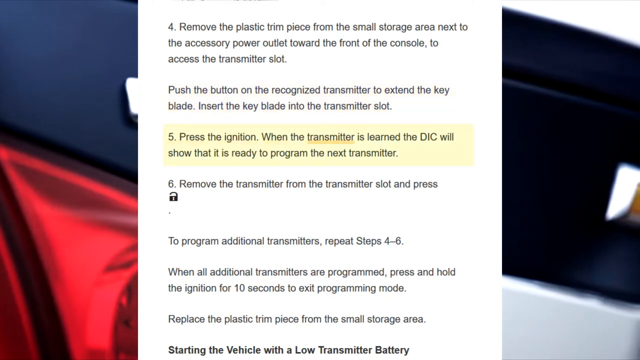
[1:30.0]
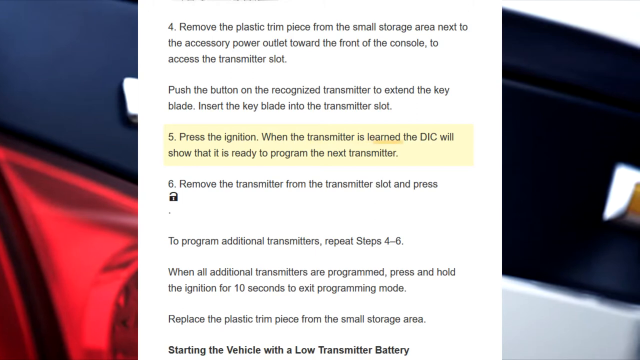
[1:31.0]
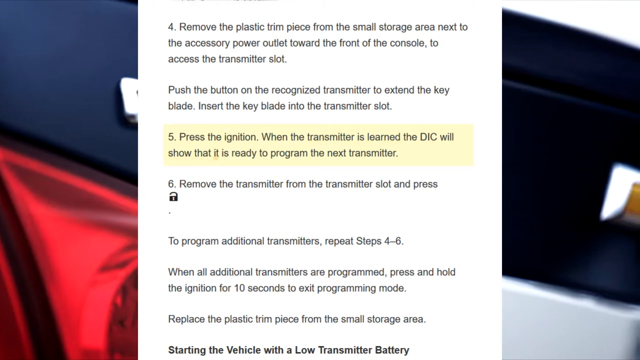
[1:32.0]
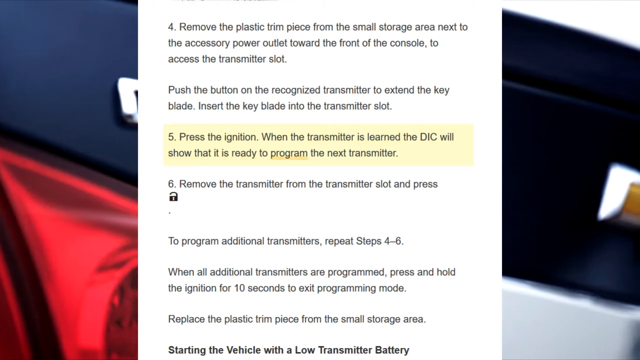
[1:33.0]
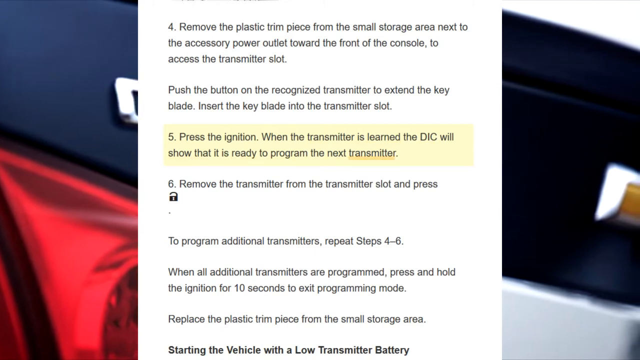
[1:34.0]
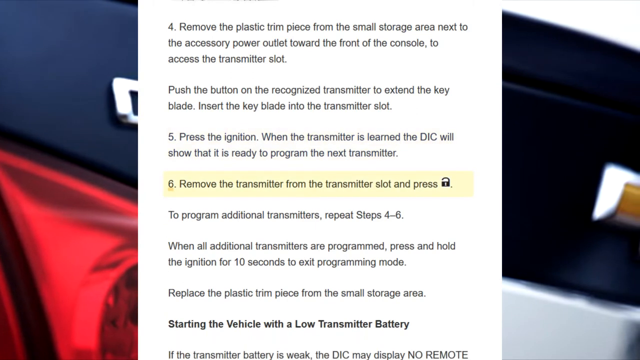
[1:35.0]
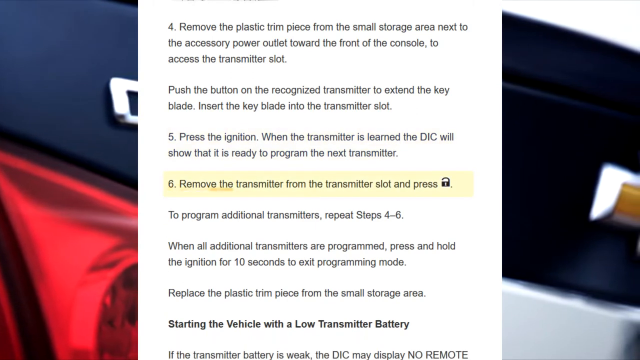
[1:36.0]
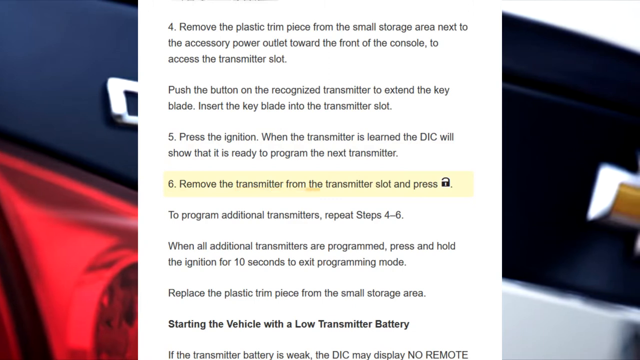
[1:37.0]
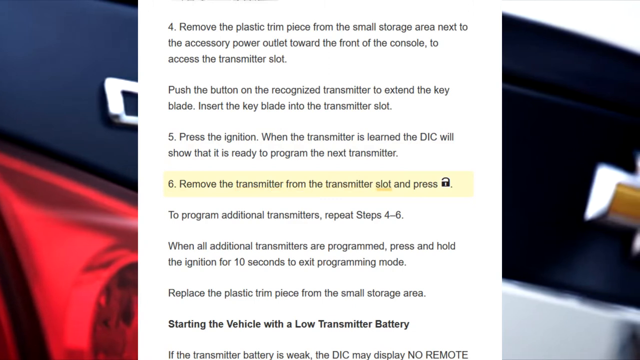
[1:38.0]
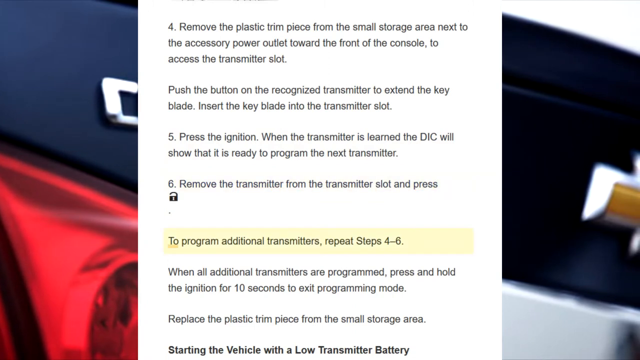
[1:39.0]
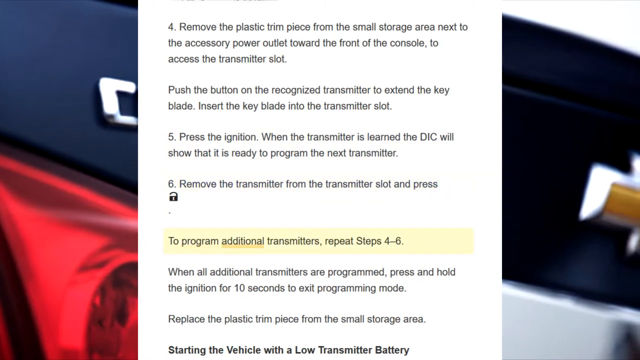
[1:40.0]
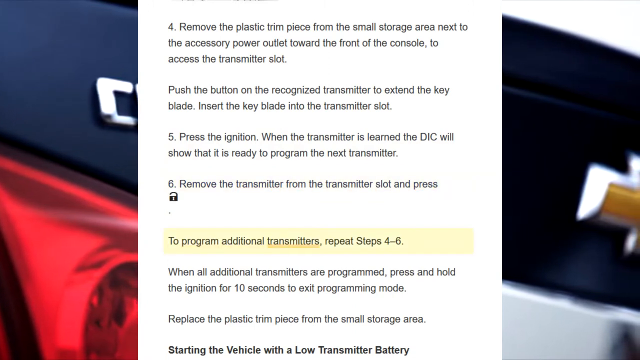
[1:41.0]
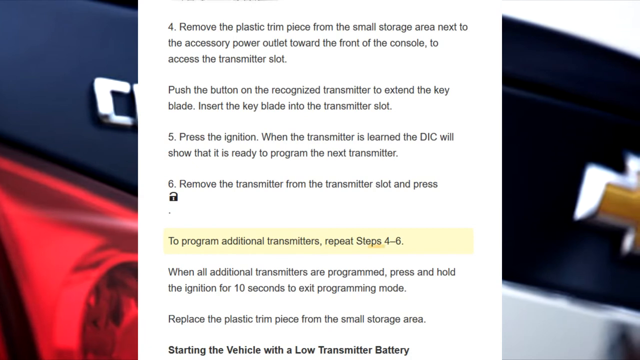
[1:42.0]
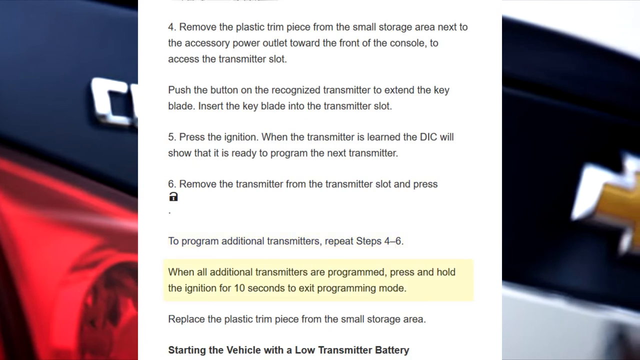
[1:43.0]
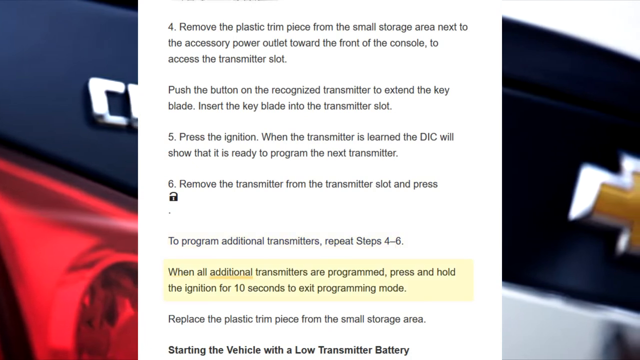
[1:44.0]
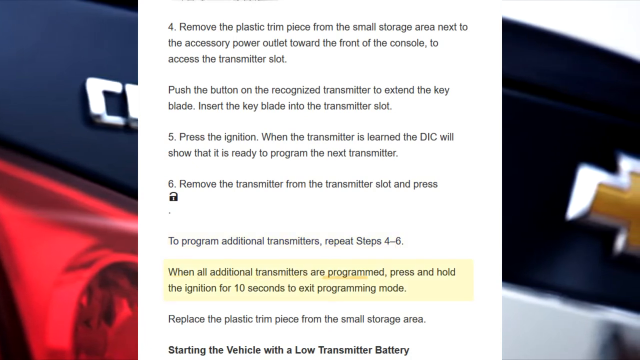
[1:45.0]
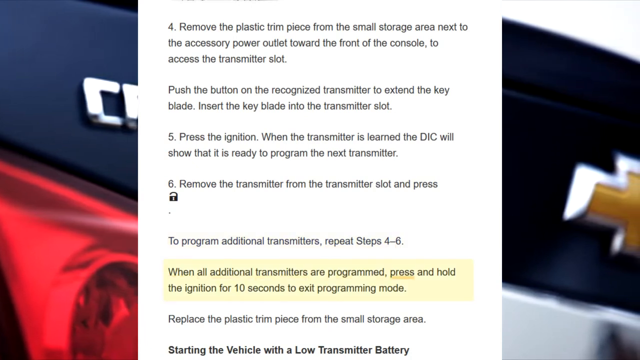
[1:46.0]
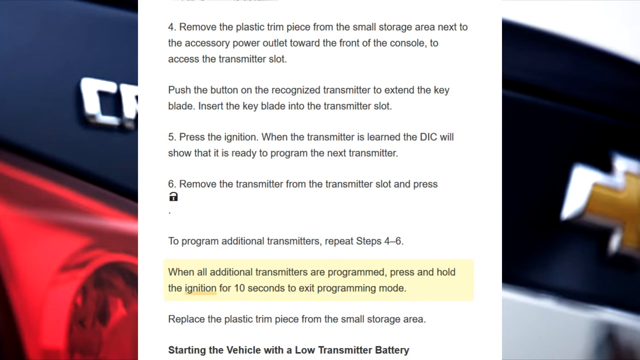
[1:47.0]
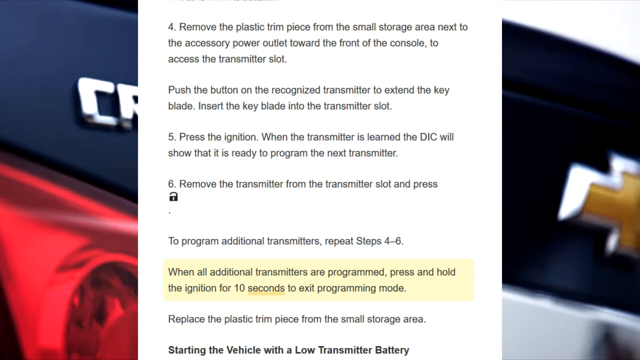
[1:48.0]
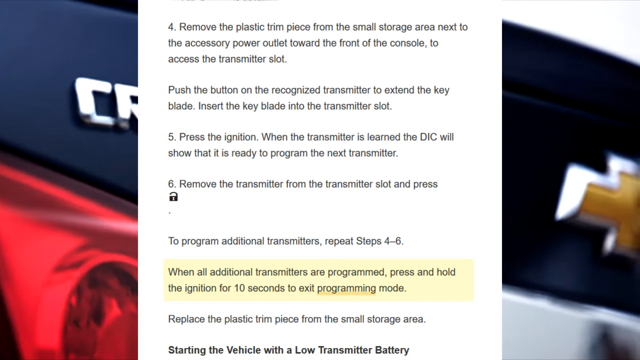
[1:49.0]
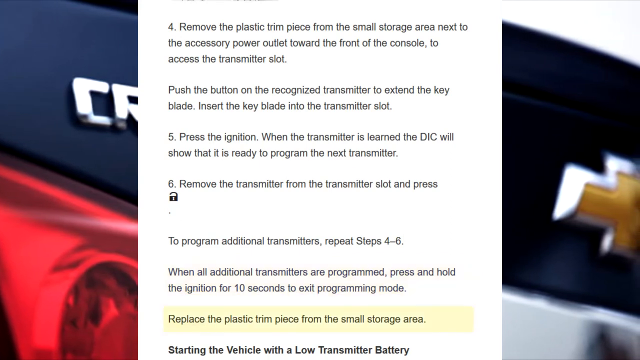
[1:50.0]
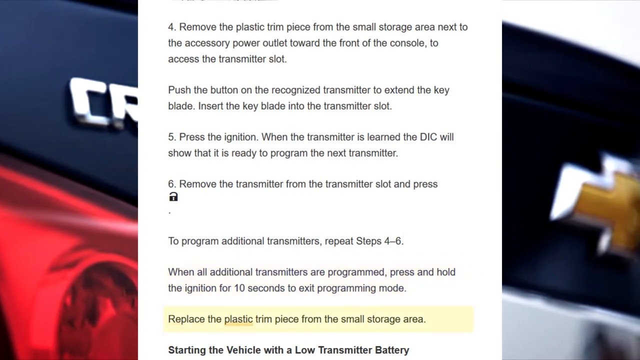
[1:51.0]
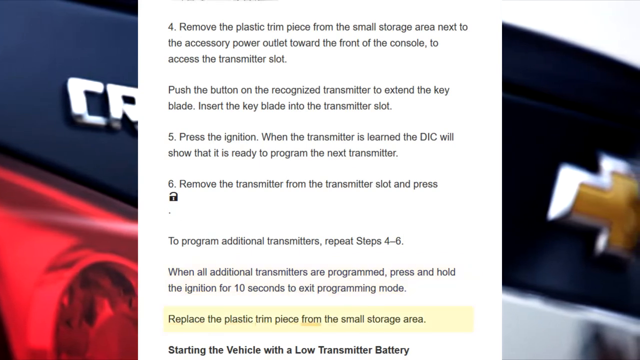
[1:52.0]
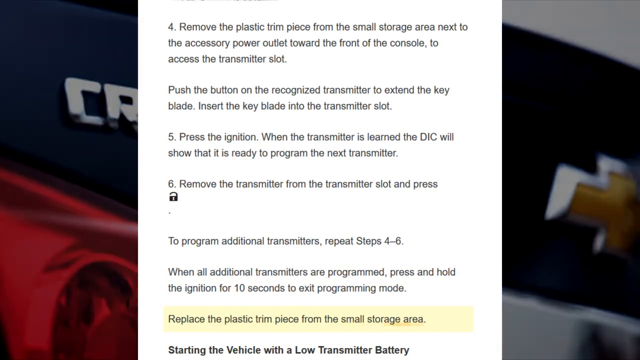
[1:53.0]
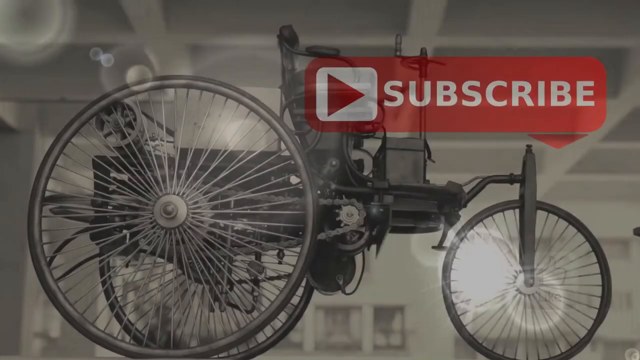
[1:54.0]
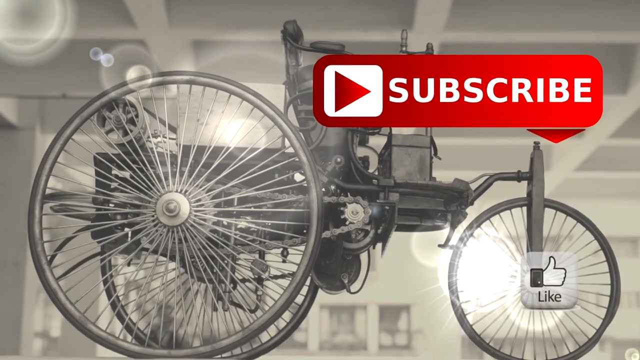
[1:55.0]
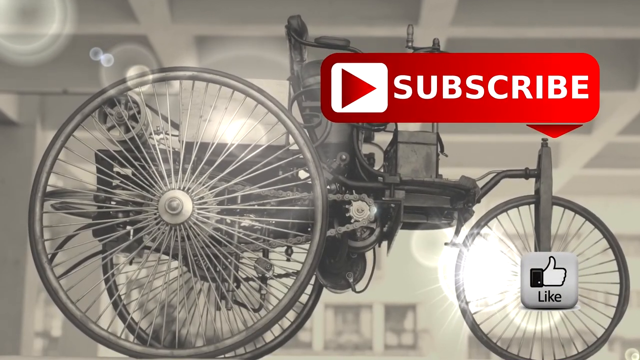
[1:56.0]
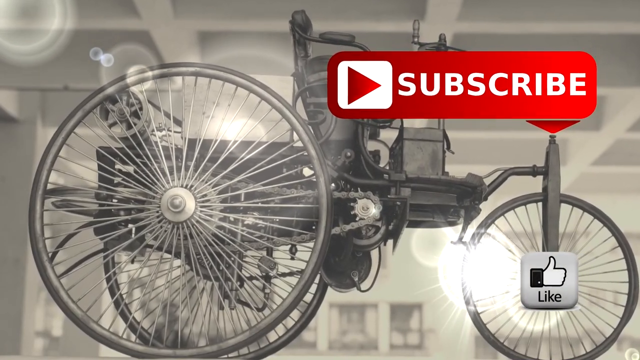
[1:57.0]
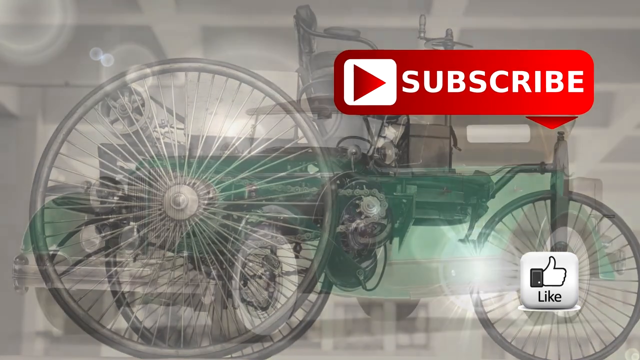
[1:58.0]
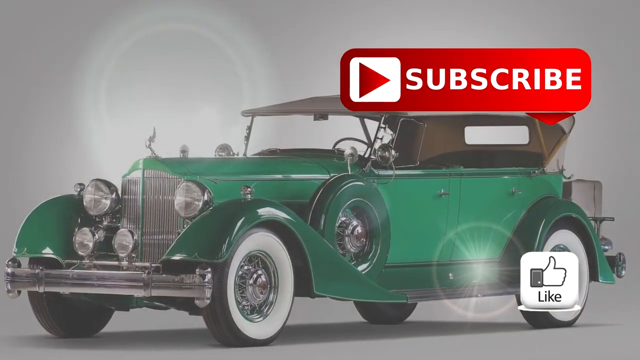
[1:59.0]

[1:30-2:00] The view pans ever so slightly to the right as the highlight moves from paragraph five to paragraph six, which says to "remove the transmitter" and "press the unlock button." As it pans right, part of a Chevy logo with a silver border and yellow inside comes in from the right side, and a C comes in on the left. The next paragraph says "to program additional transmitters. See steps four through six"; it is highlighted and then each word is underlined individually. The next one highlighted says "when all additional transmitters are programmed, press and hold the ignition for 10 seconds to exit programming mode." Still panning slightly right, the next letter over from the C is visible as an R. The video then shows an old three-wheel bicycle: metal in the center, a big chain, the single tire on the right side and slightly bigger wheels on the back, all wire-spoked. It is inside a white building, with light shining just over the back tire and between the front tire's spokes. Down on the front tire is a thumbs up that says "like," and across the top toward the right is the red YouTube subscribe button. The camera slowly pans back left a little, then cuts to an old green car with its front toward the left and back to the right, a black top, four doors, and thick white walls on the tires; it looks like it is from the 1940s or 50s. The background is gray, and the camera slowly zooms in on it.